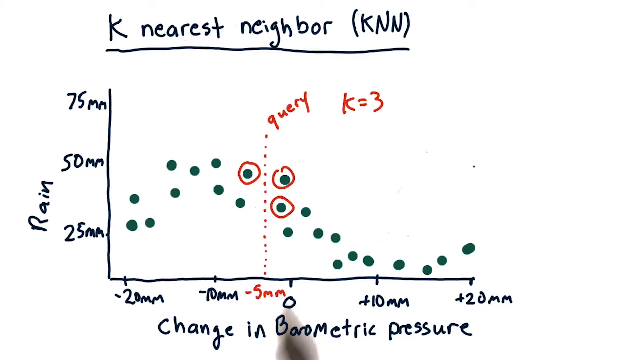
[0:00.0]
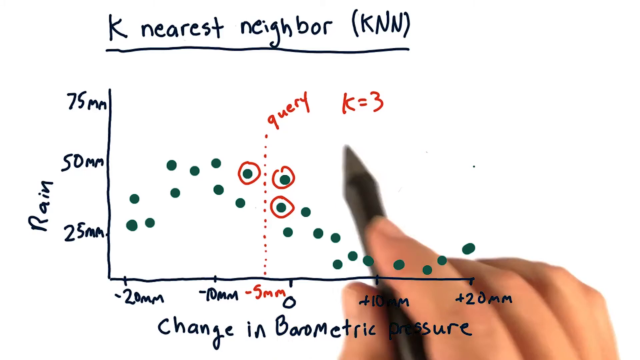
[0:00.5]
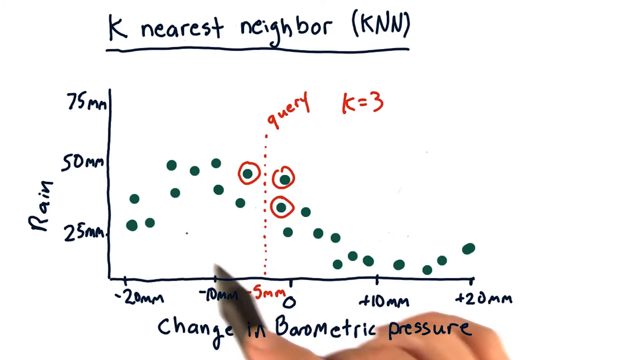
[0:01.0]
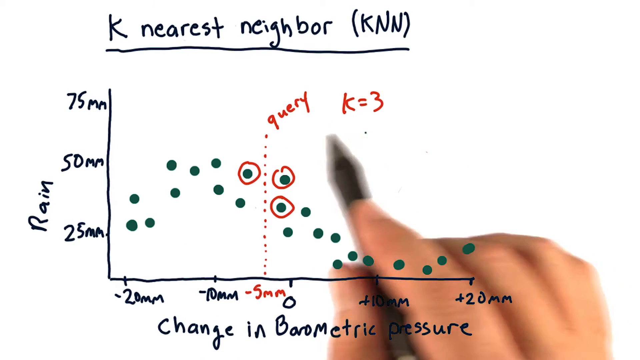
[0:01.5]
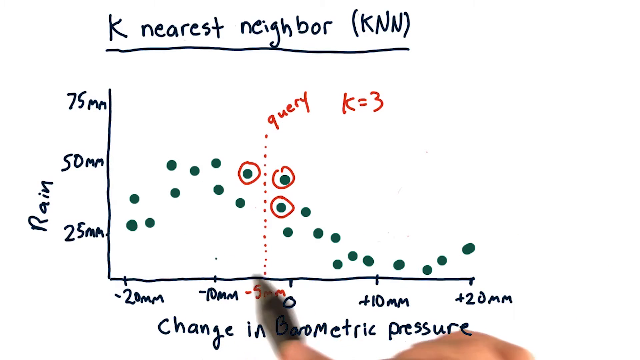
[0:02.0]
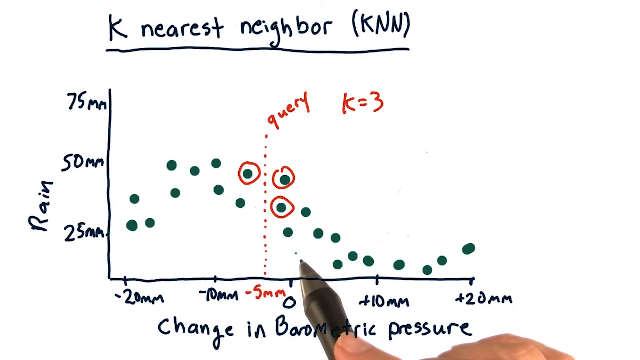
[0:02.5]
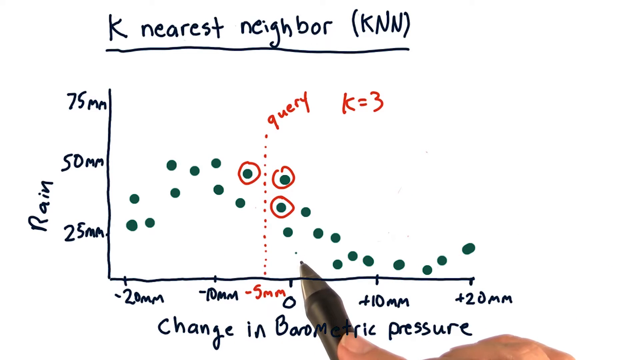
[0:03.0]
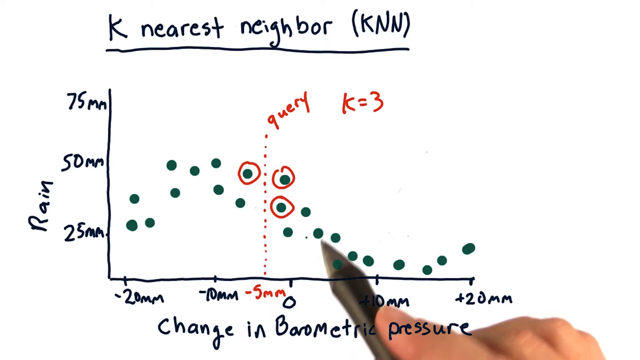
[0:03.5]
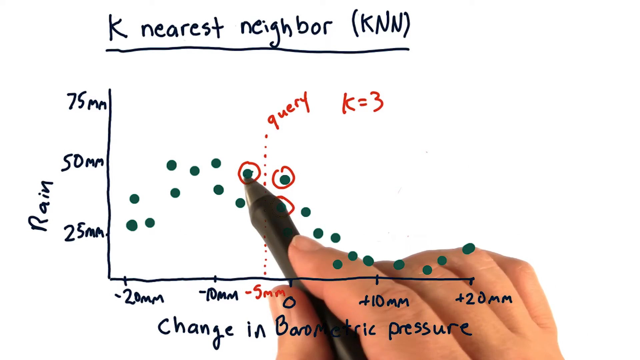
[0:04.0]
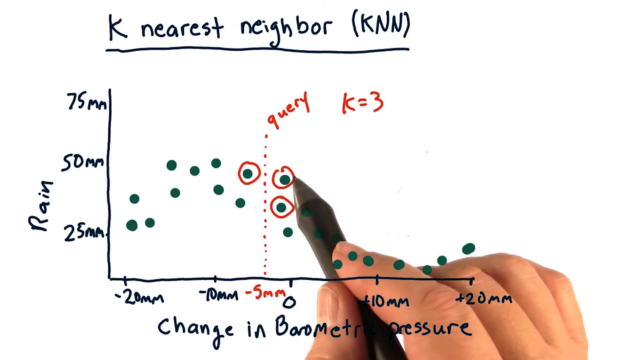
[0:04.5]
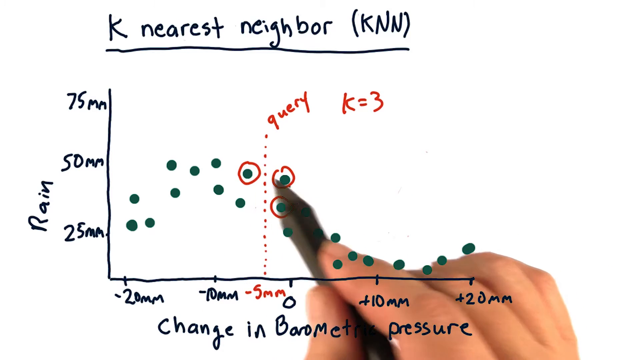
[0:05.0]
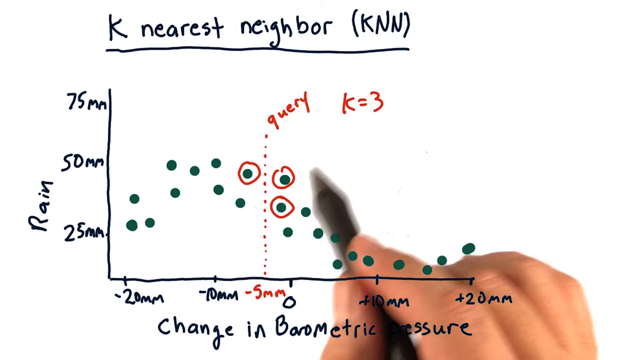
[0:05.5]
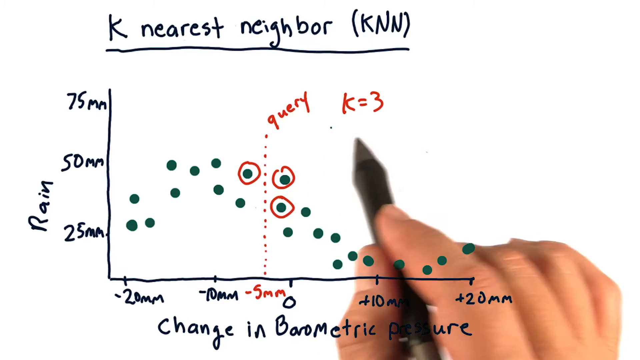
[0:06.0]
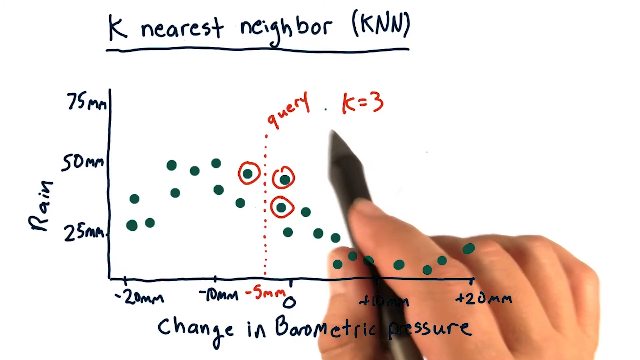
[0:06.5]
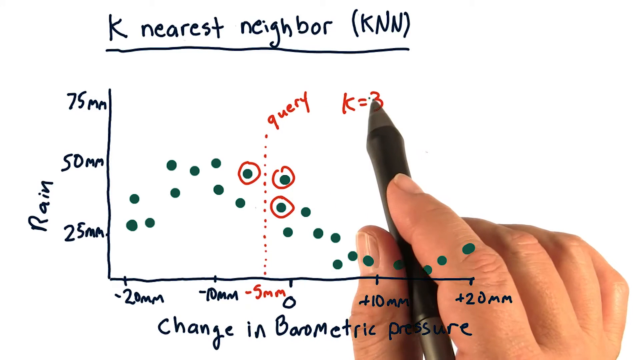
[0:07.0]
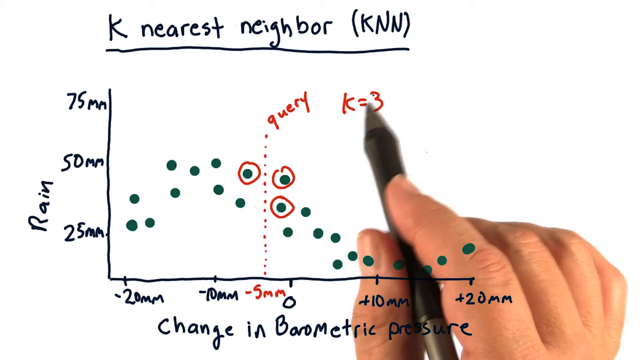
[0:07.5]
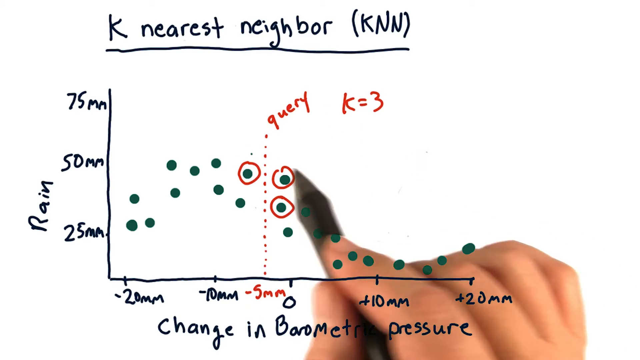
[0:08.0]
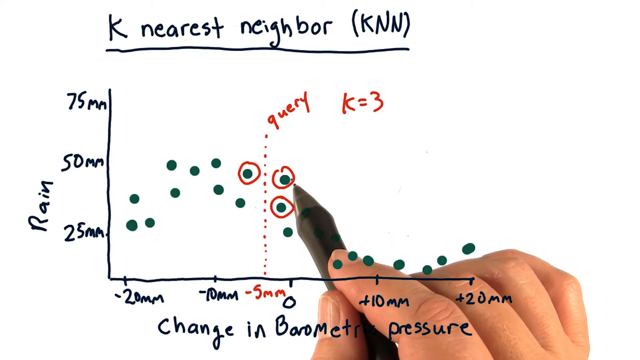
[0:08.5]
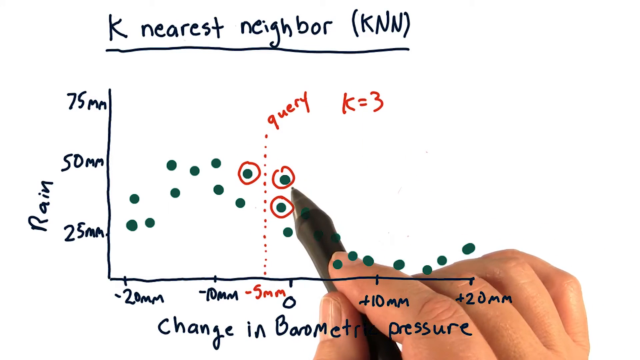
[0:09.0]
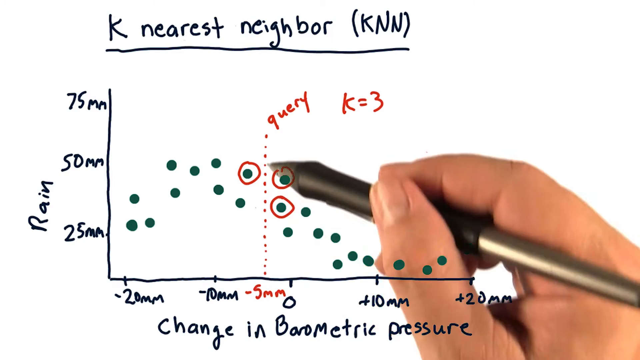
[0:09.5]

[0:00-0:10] The video opens on a predominantly white screen with superimposed hand-drawn text and illustration, mainly in blue. At the top is the title 'K nearest neighbour (KNN)', and below it is a graph. The left vertical axis is titled 'Rain' and shows three numbers arranged vertically along the side: 75mm at the top, 50mm in the middle and 25mm below that. The bottom horizontal axis is labelled 'Change in barometric pressure', with the numbers -20mm, -10mm, 0, +10mm and +20mm along it. Between -10mm and 0, -5mm is written in red. Green dots are mapped out on the graph. In the middle of the graph, directly above the red -5mm, red dots go up. Written in red at the top is 'query', with three of the green dots beneath it circled, and next to 'query' is 'K=3' in red. Someone's right hand appears from the bottom right of the shot; it is live-action colour footage of a hand appearing to hold a black electronic pen. The hand and pen appear above the white surface but below the handwritten text and graph. The hand moves to the centre of the graph, with the pen positioned near the three dots circled in red as if to draw attention to them, then moves up to the red 'K=3', hovers over it, and moves back to the circled dots.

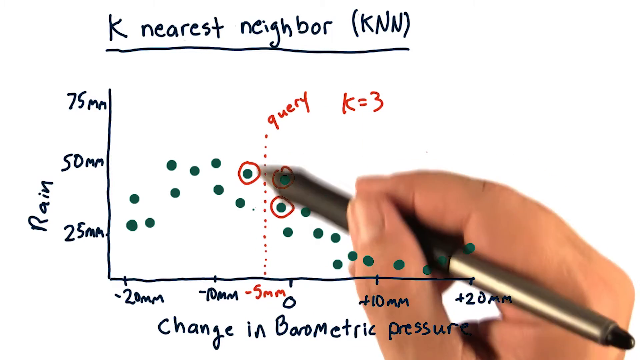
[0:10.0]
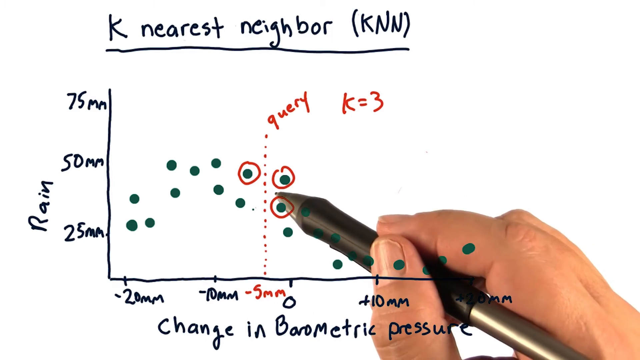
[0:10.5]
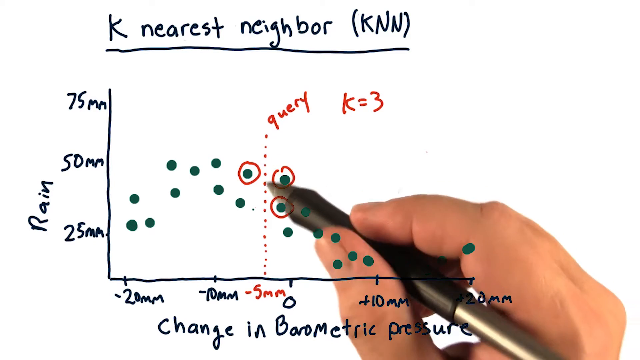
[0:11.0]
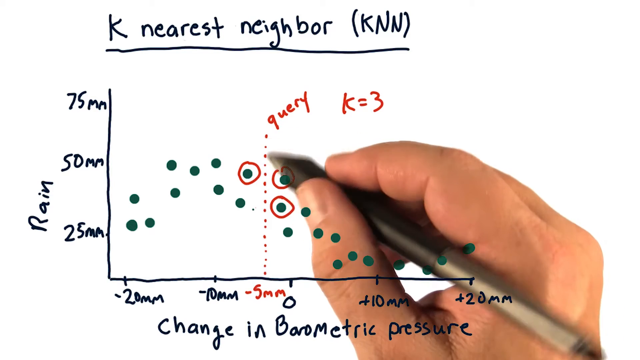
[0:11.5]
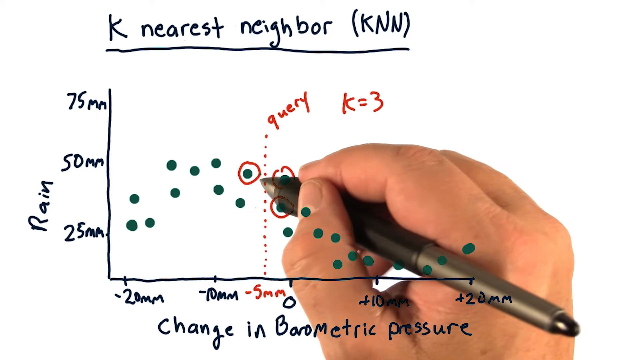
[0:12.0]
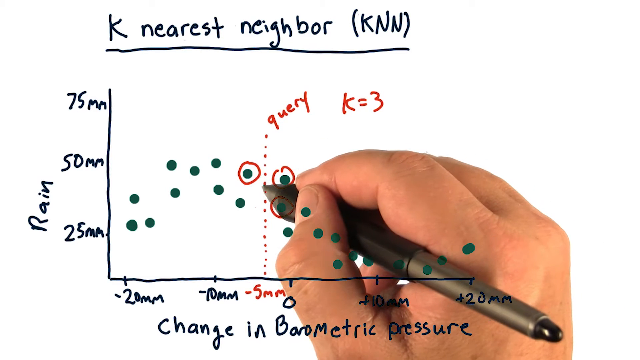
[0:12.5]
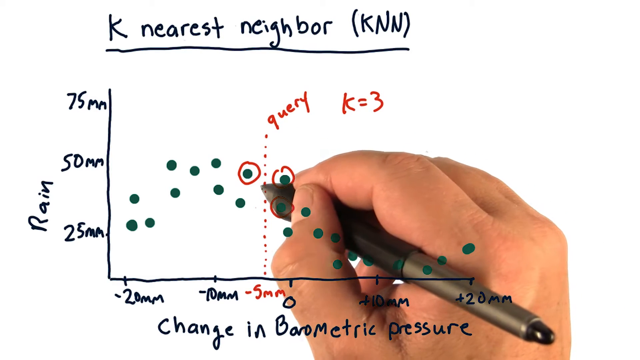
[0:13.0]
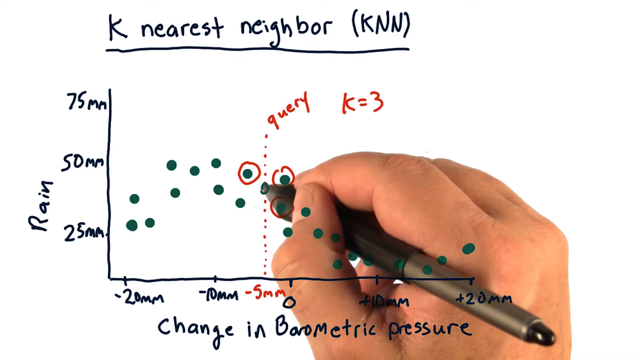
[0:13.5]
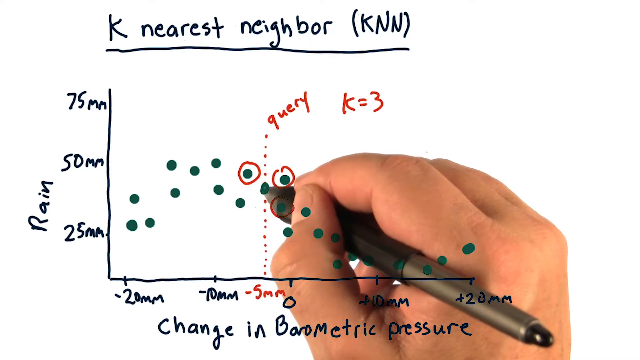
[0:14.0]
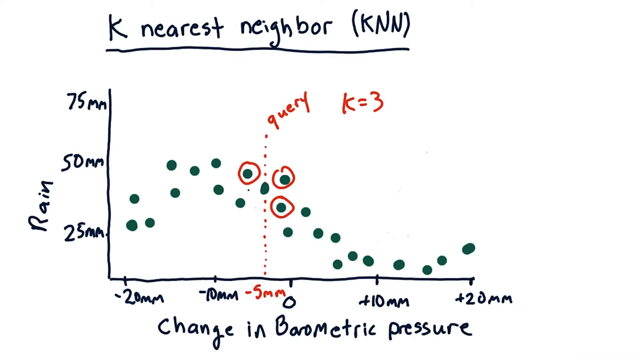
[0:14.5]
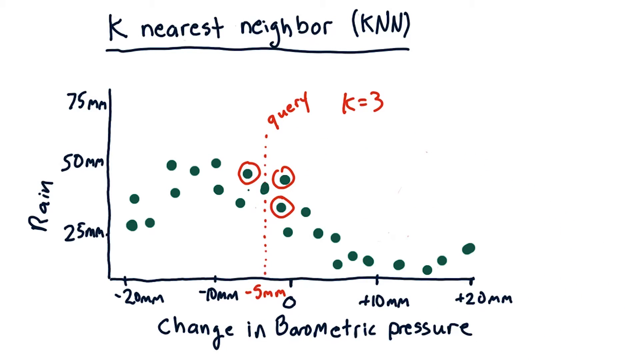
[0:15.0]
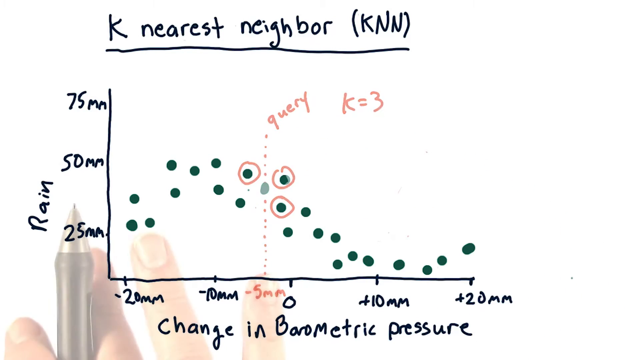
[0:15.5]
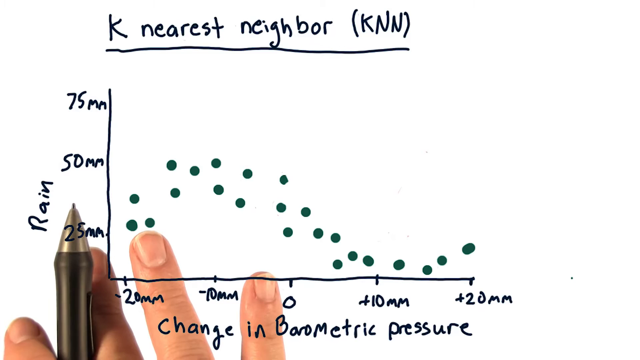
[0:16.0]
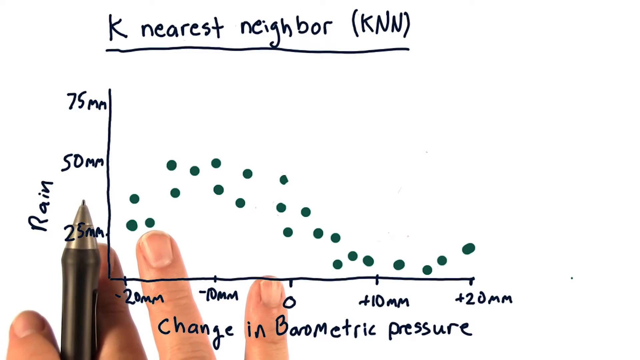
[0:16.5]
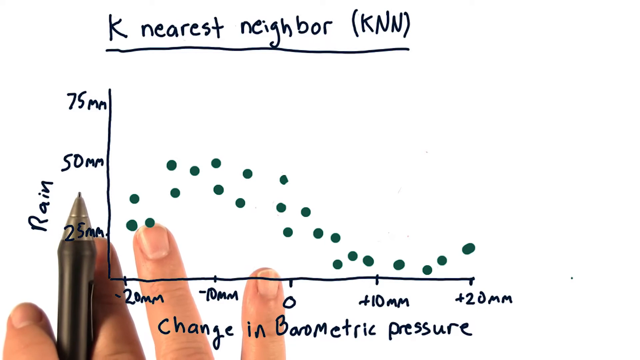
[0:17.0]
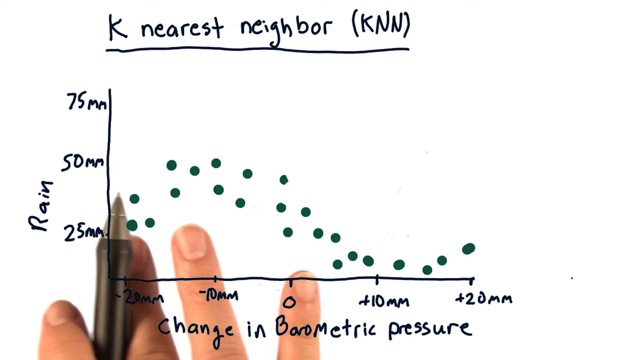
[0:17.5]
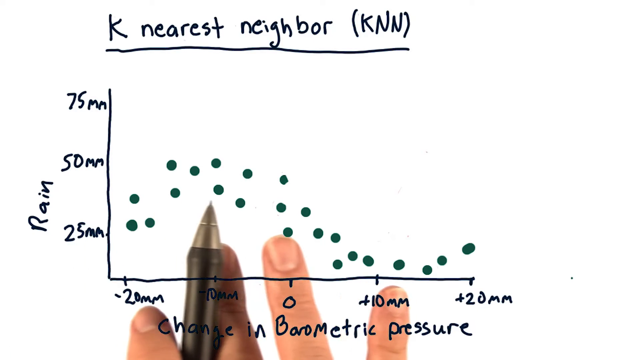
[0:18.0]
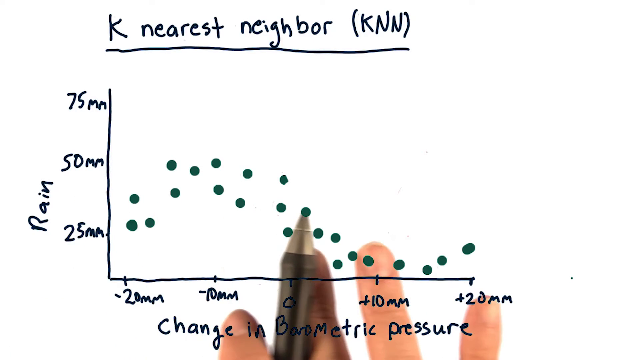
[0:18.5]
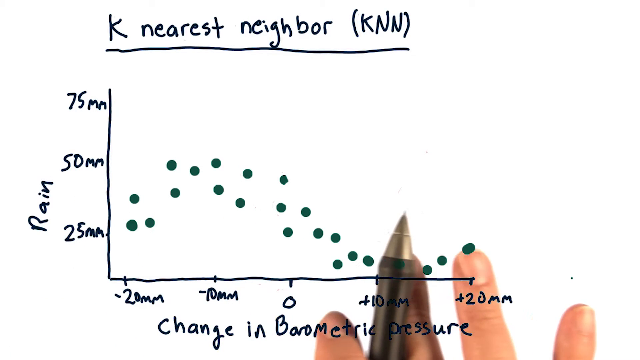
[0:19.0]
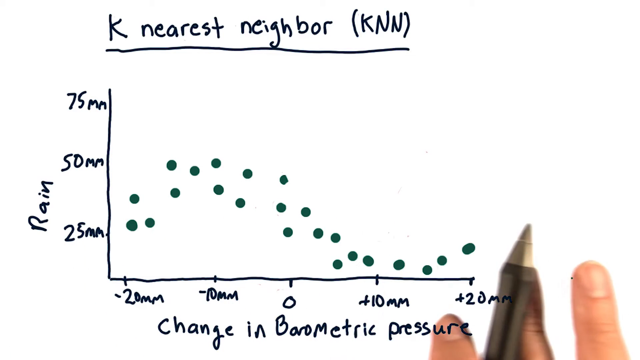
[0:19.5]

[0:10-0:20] The right hand holding the electronic pen rises from the bottom of the screen over the hand-drawn graph, appearing to draw attention to the centre of the graph, where a series of green dots has three of them circled. The pen pauses between two of the circled dots, exactly where the vertical red line rises above -5mm from the bottom horizontal axis, and draws an additional green dot. The hand then disappears down out of the bottom of the frame very rapidly. The video transitions to a very similar shot of the white screen and hand-drawn graph, but the green dots are no longer circled in red, the extra green dot is gone, and all of the red text has disappeared. Instead, the fingers of the right hand are at the bottom left of the screen holding the black electronic pen, and they move slowly across to the bottom right side of the screen.